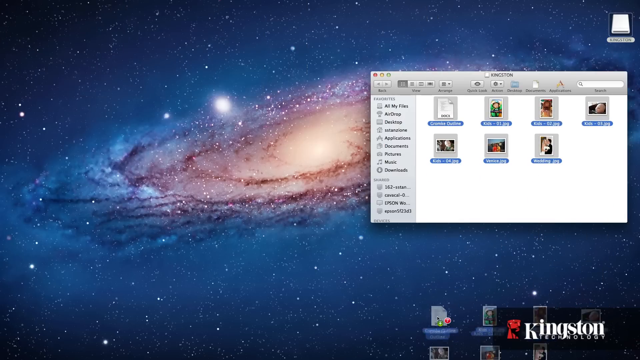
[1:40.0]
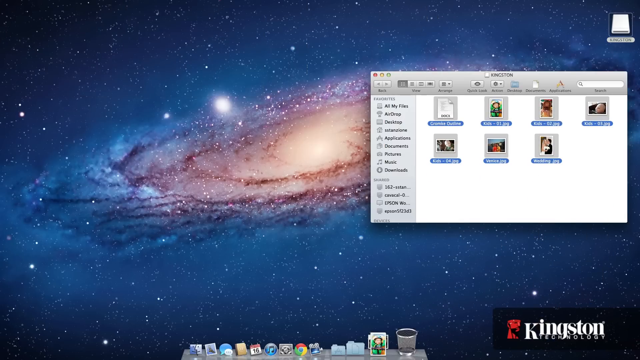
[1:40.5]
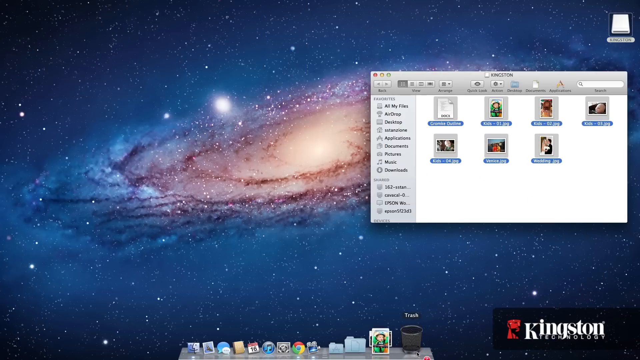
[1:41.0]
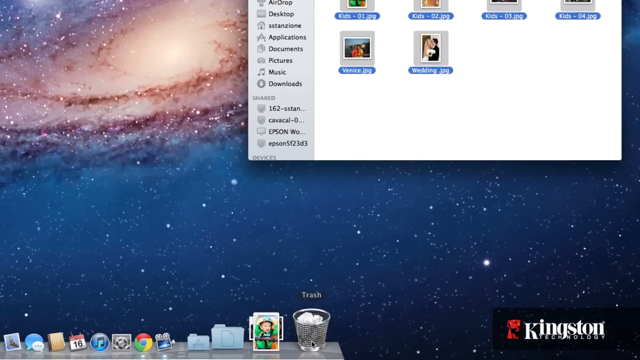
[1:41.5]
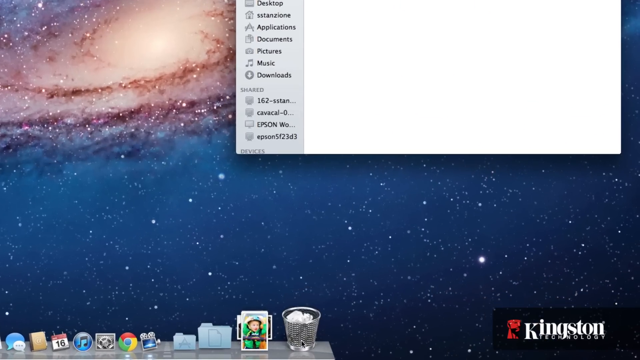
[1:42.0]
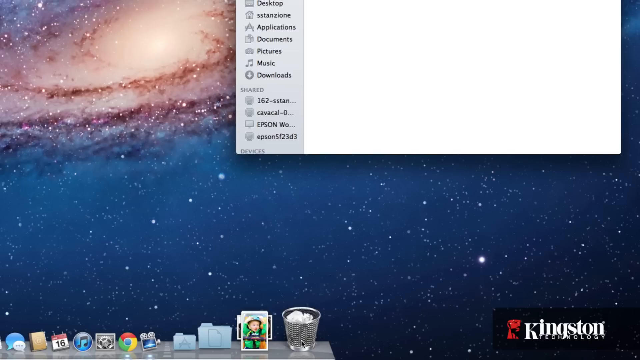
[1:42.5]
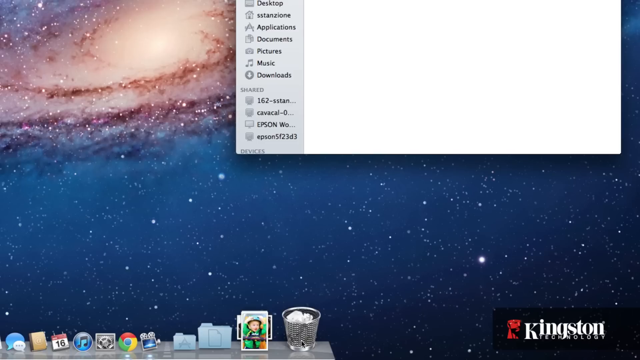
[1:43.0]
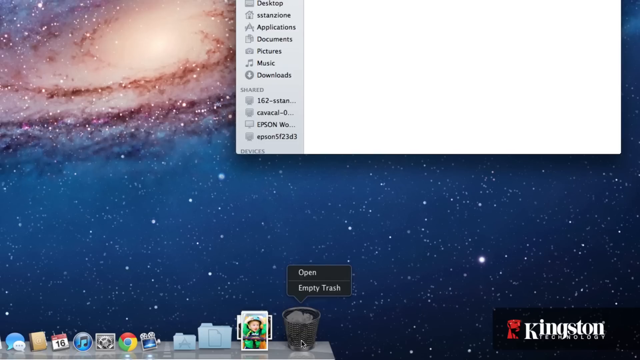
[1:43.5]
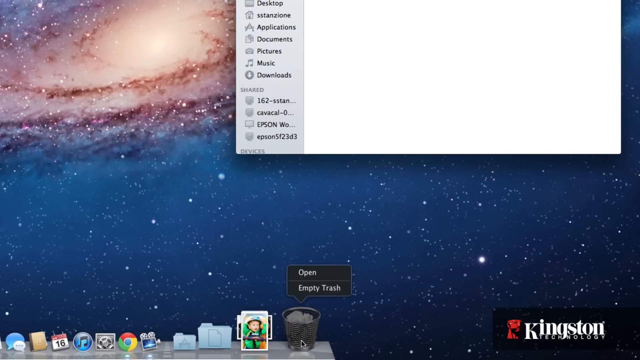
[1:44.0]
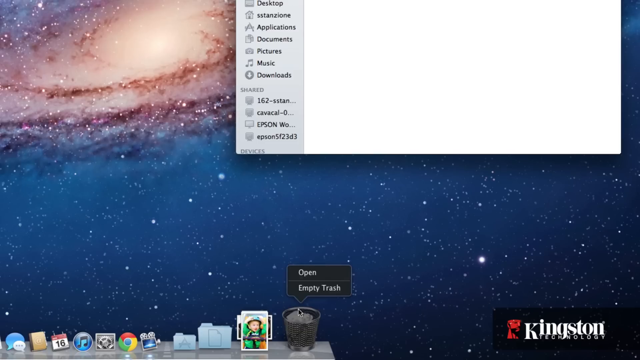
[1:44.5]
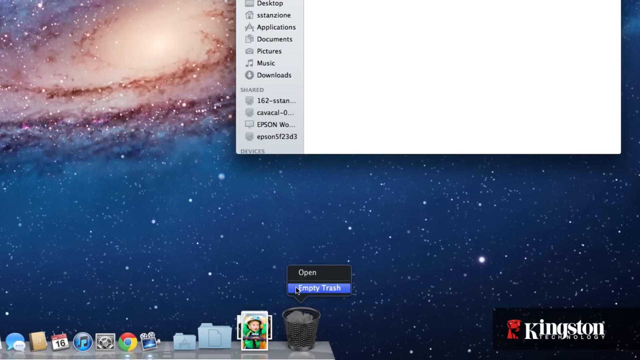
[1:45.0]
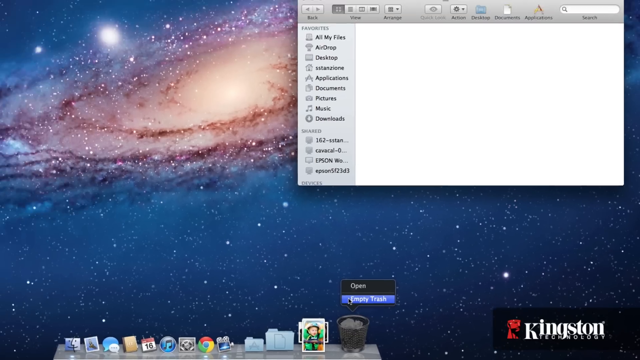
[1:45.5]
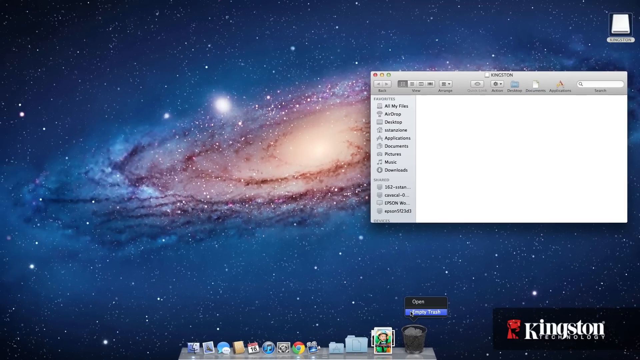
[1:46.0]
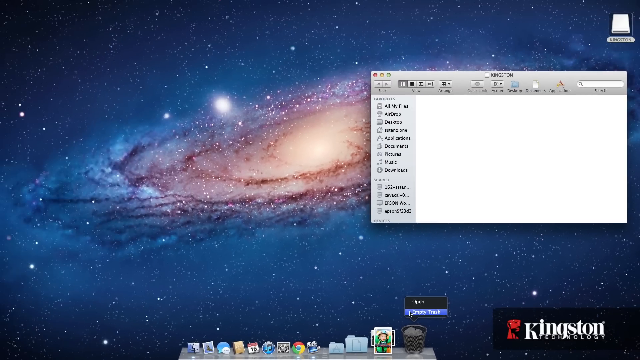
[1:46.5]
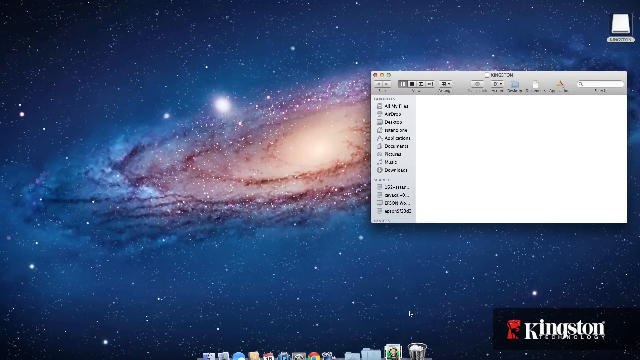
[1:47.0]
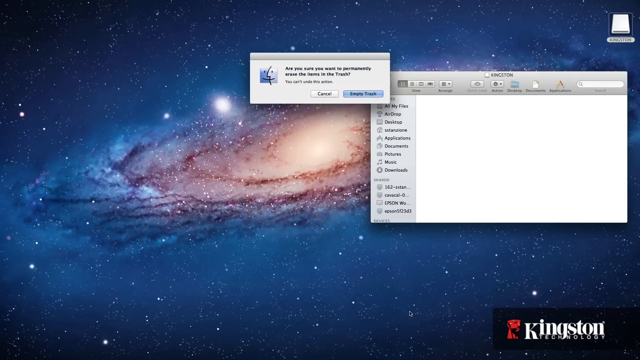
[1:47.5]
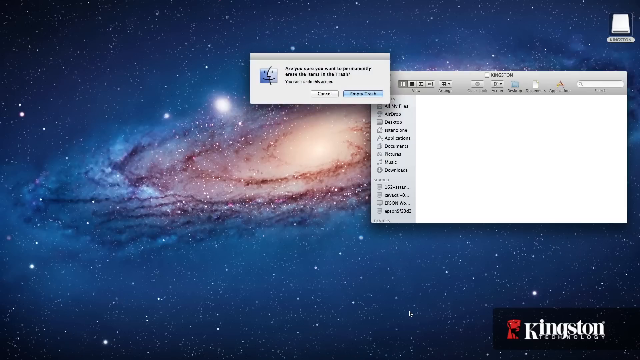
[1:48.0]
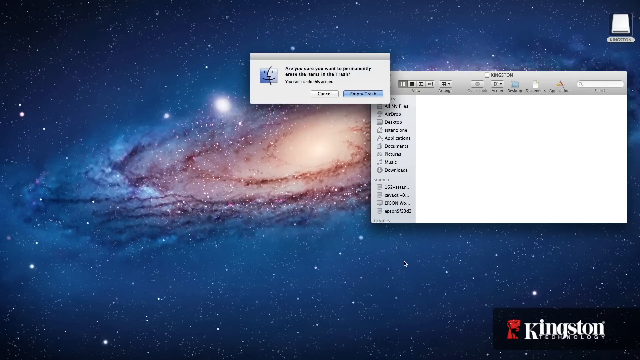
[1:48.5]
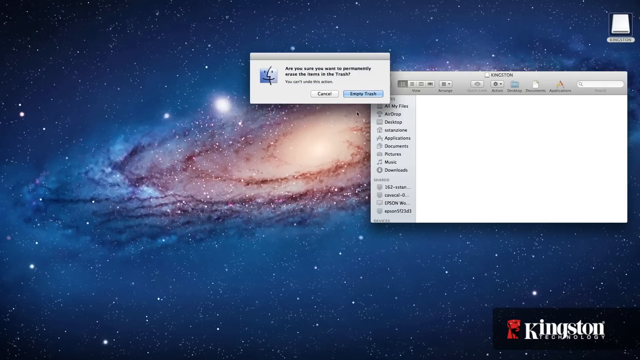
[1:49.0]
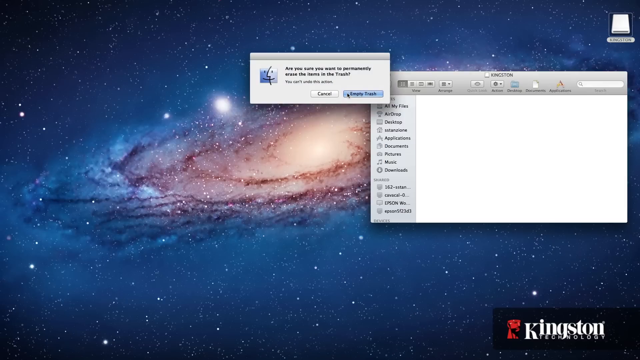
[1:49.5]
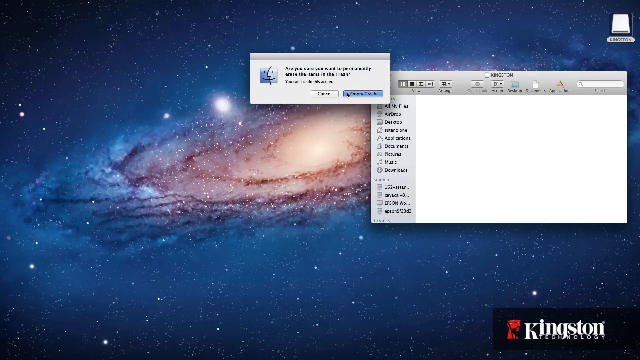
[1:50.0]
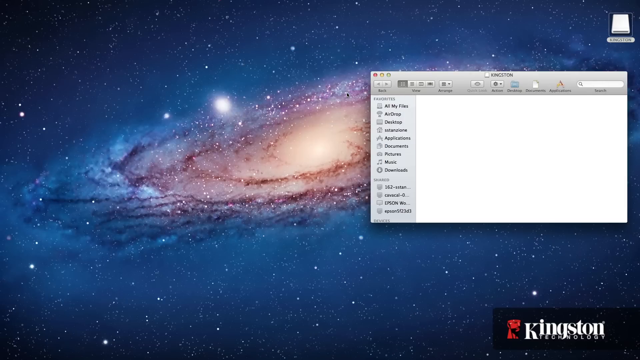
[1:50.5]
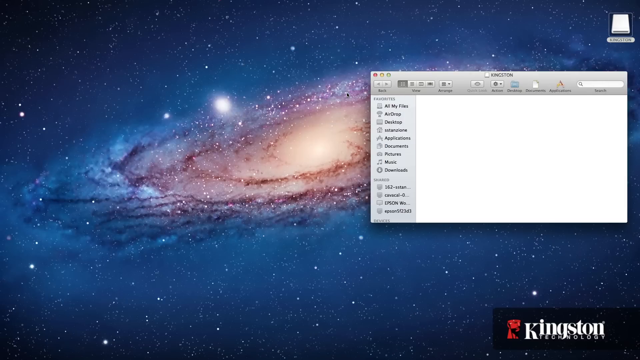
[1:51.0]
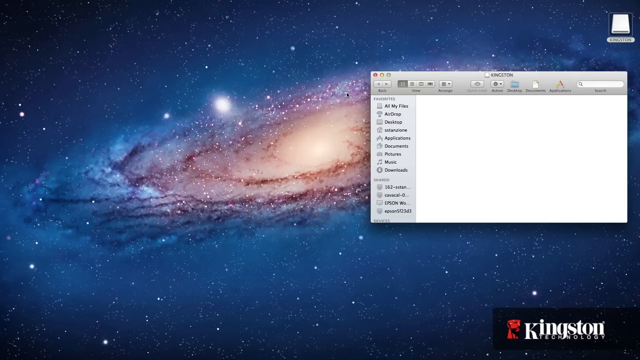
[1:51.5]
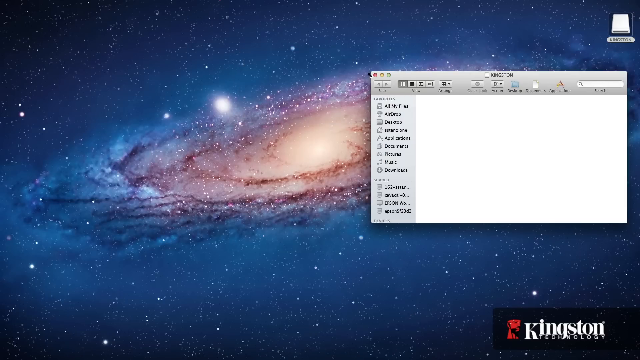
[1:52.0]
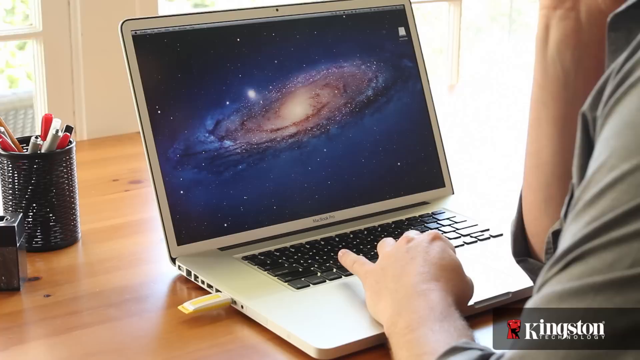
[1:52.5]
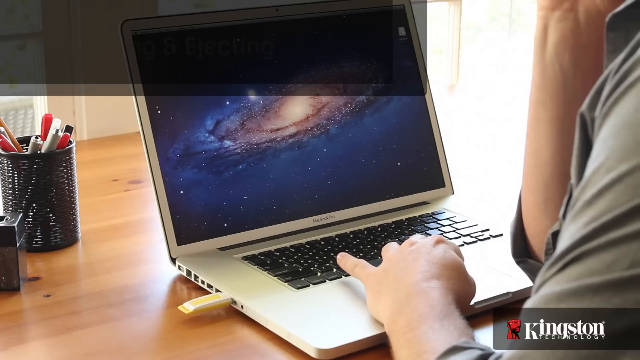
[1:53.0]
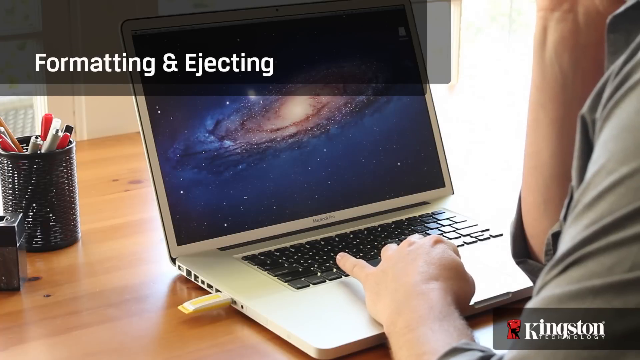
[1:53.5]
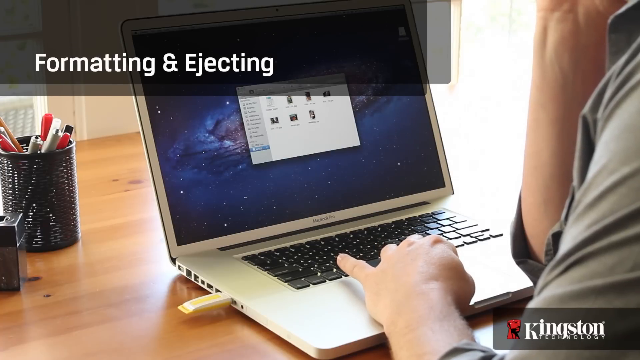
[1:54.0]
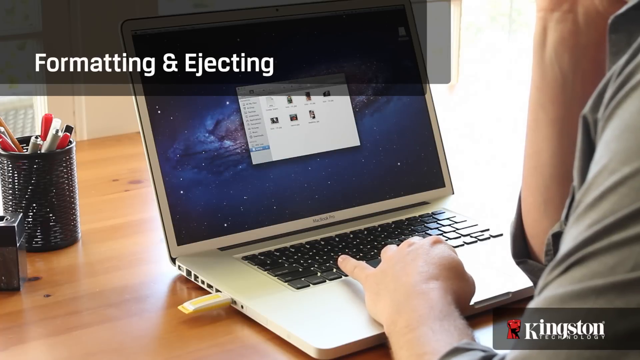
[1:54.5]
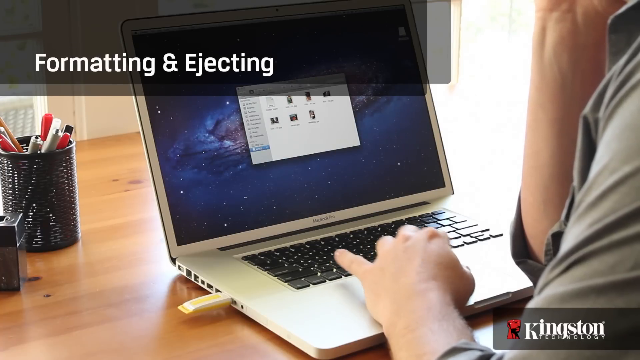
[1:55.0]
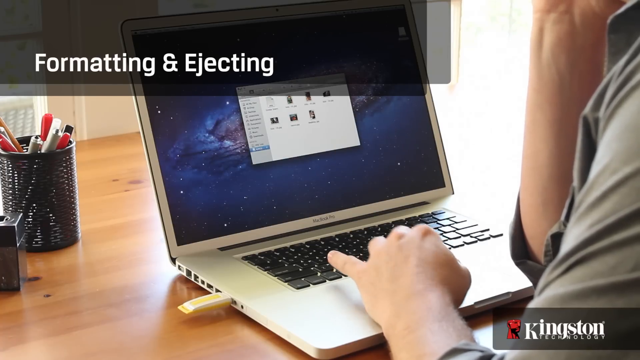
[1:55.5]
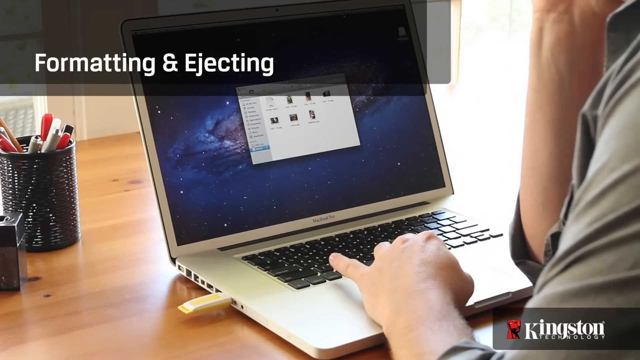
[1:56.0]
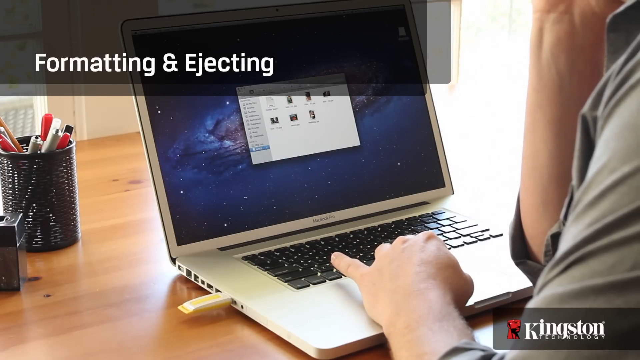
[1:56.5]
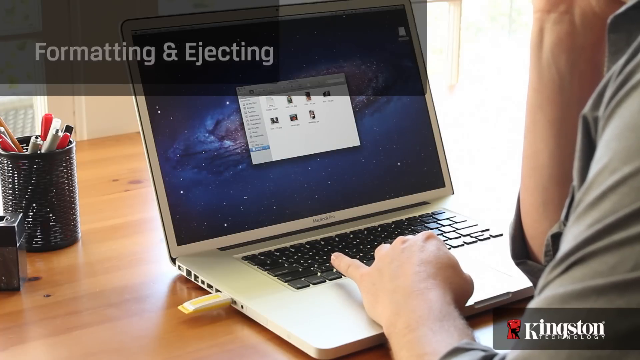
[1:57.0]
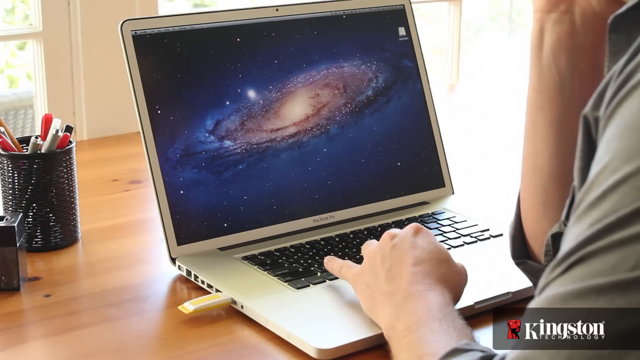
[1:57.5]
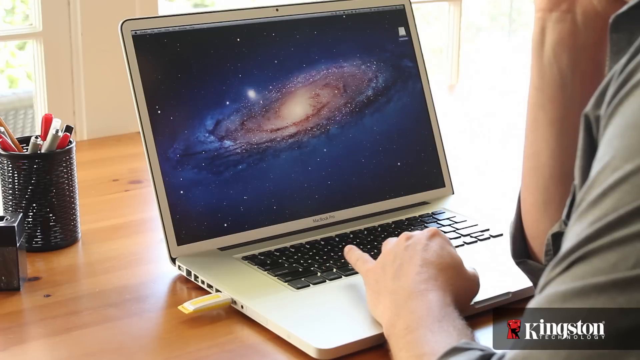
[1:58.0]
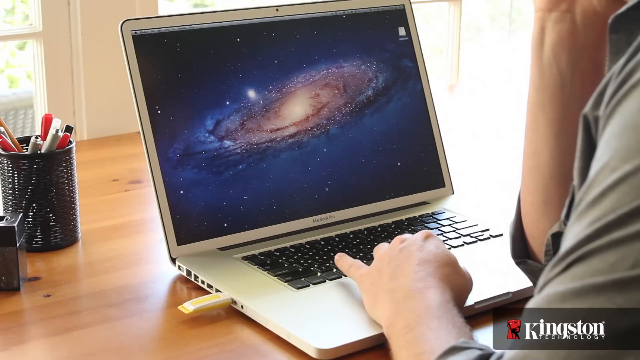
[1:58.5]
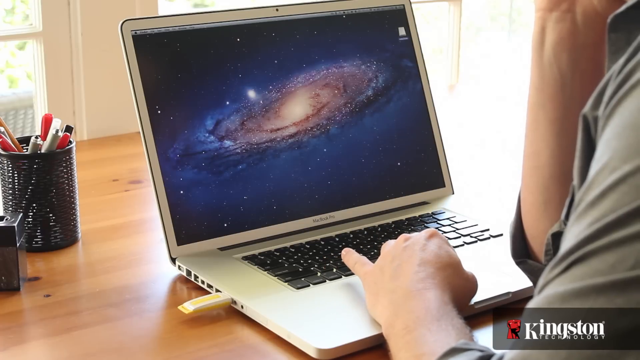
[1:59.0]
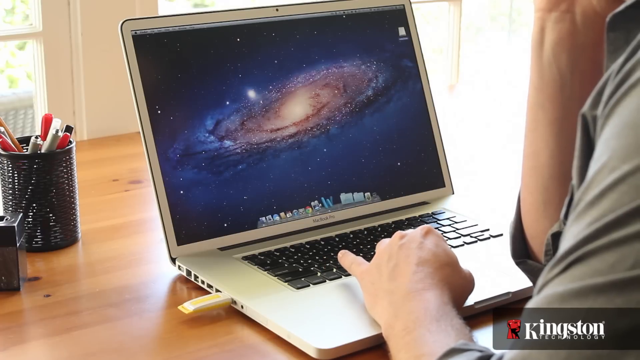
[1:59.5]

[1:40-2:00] Areas with different files are open on a computer screen, including downloads, music, pictures and other sections, with wedding pictures, kid pictures and a complete outline that is now saved on the USB. The area then becomes blank because everything has been put in the trash. A drop-down opens and empty trash is clicked. Another message pops up, a small rectangle with something like a smiley face in the middle, reading "are you sure you want to permanently erase the items in the trash?" With the cursor on empty trash, the person clicks, the pop-up goes away and the box is empty. A caption box then pops up reading "formatting and editing."